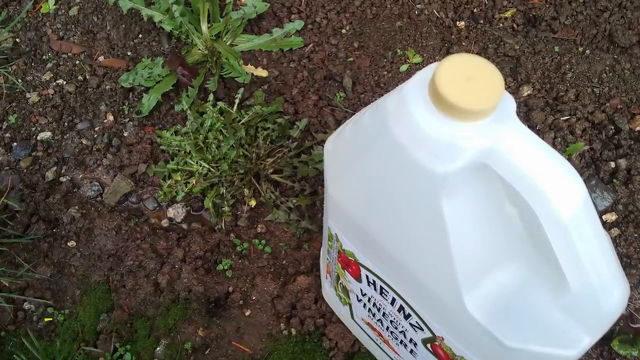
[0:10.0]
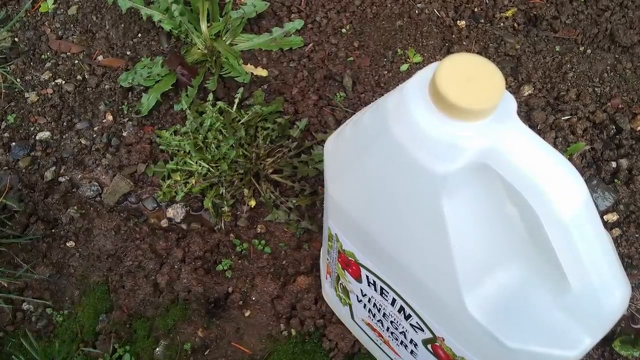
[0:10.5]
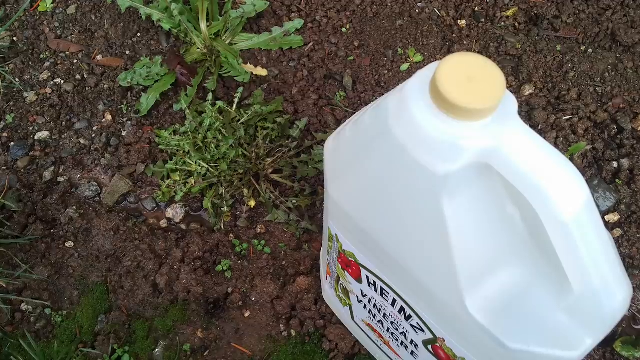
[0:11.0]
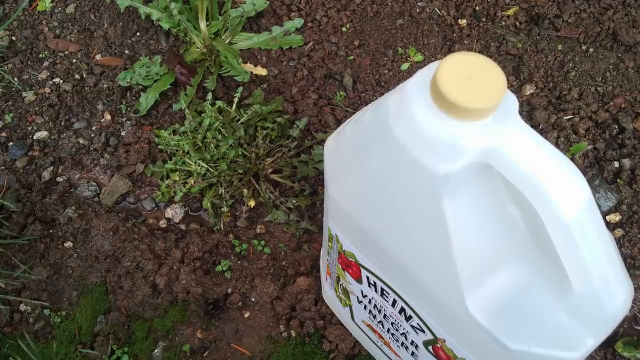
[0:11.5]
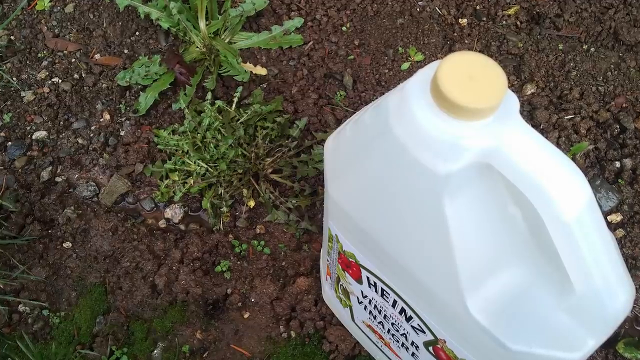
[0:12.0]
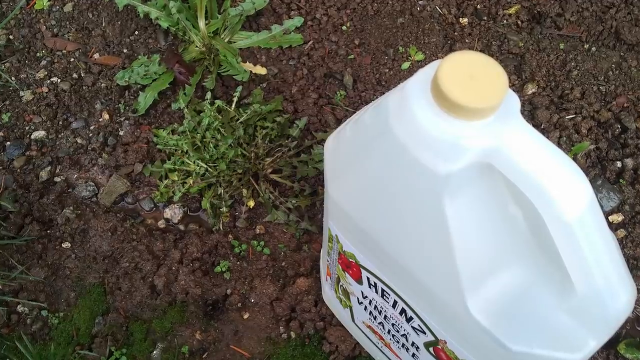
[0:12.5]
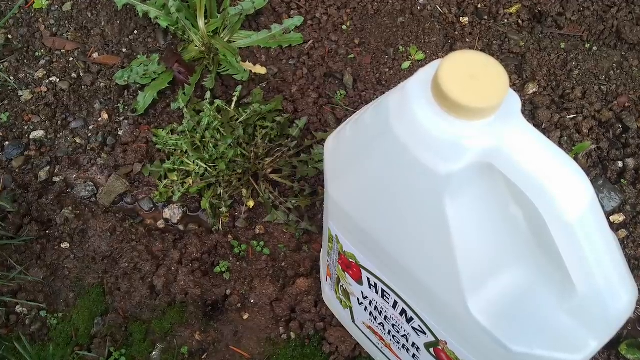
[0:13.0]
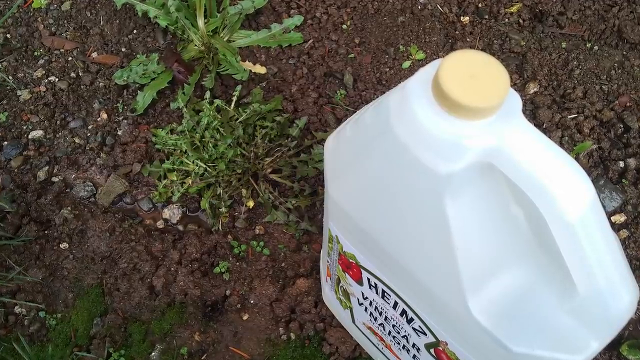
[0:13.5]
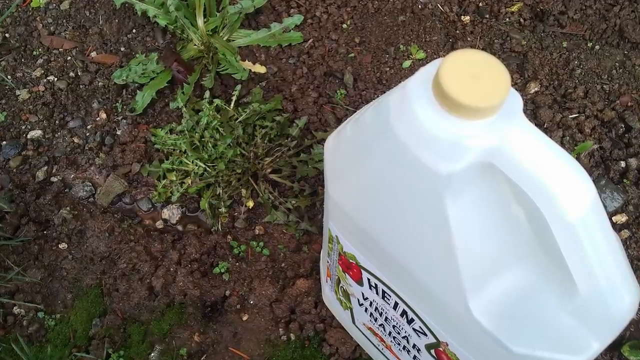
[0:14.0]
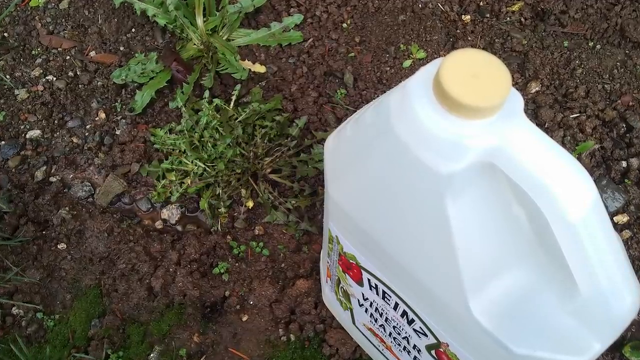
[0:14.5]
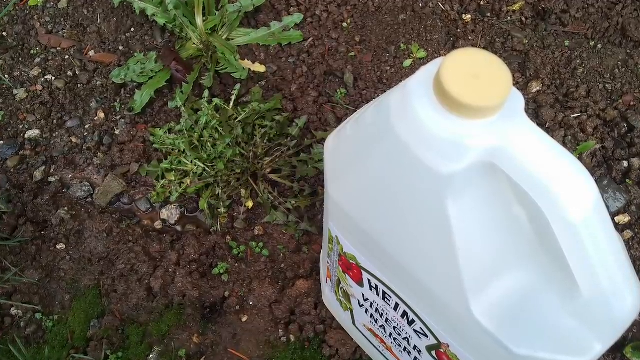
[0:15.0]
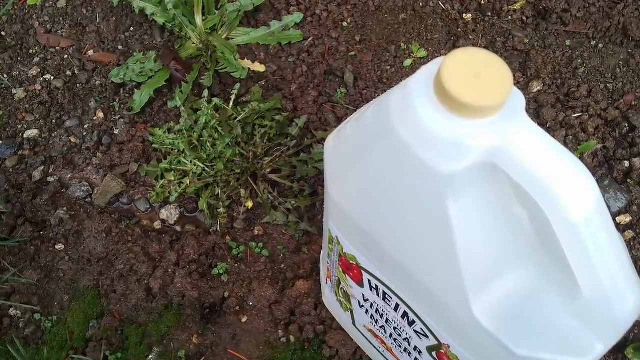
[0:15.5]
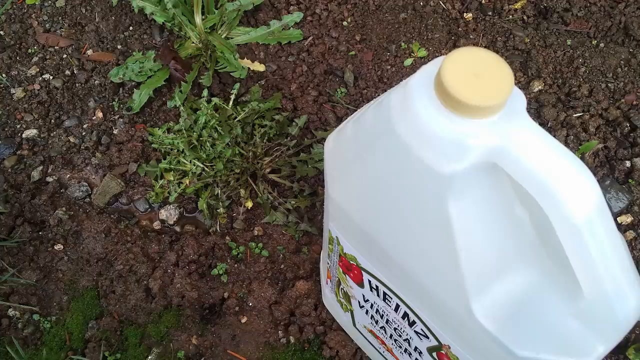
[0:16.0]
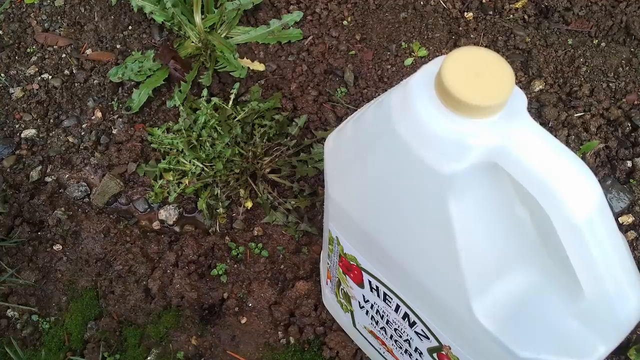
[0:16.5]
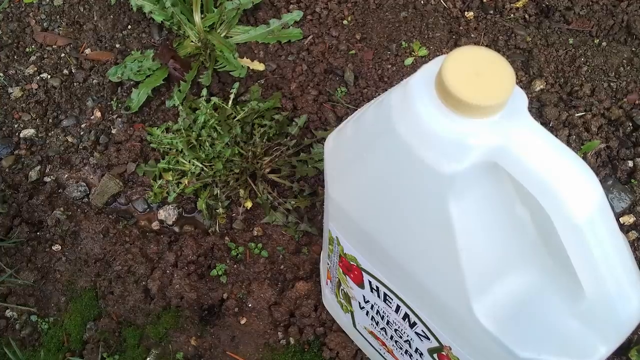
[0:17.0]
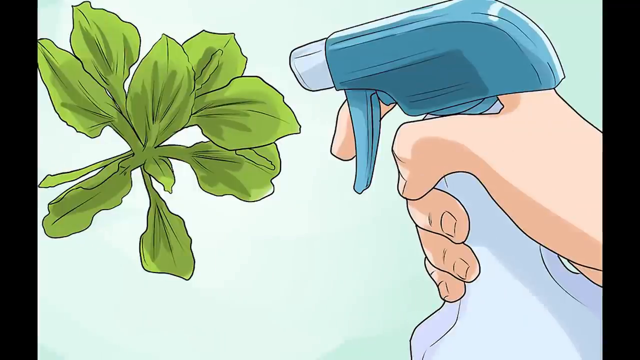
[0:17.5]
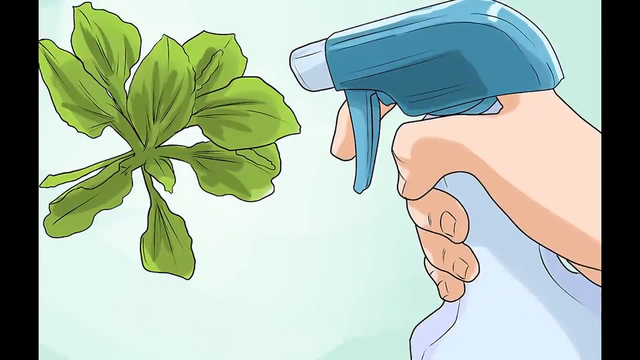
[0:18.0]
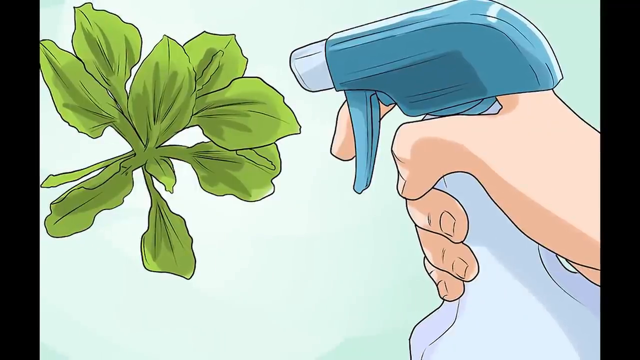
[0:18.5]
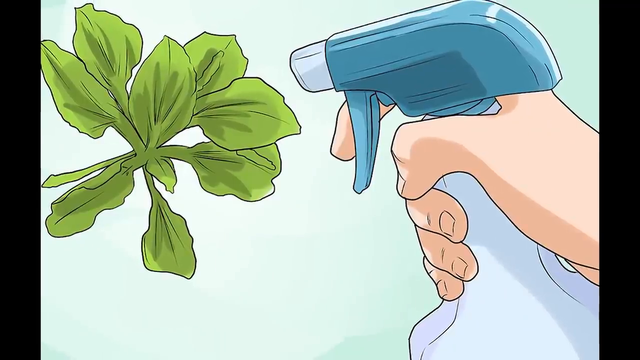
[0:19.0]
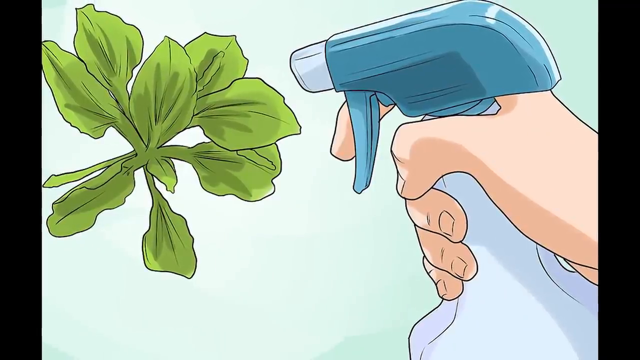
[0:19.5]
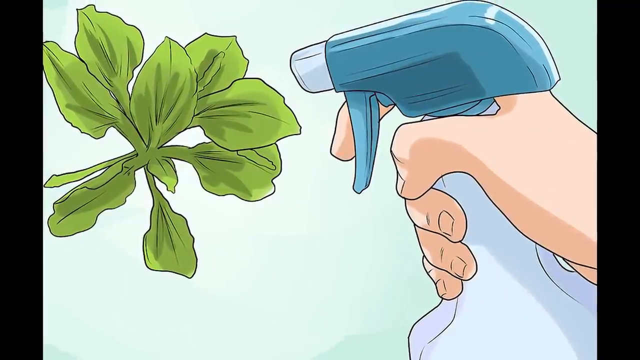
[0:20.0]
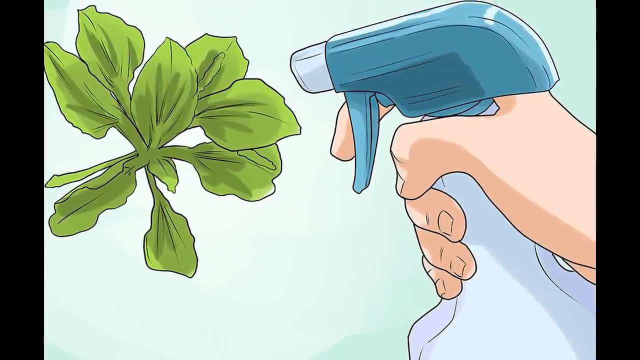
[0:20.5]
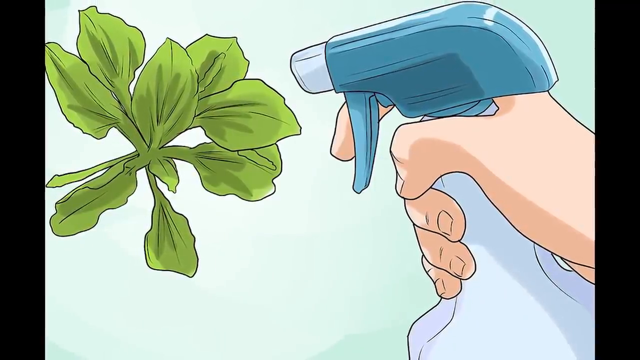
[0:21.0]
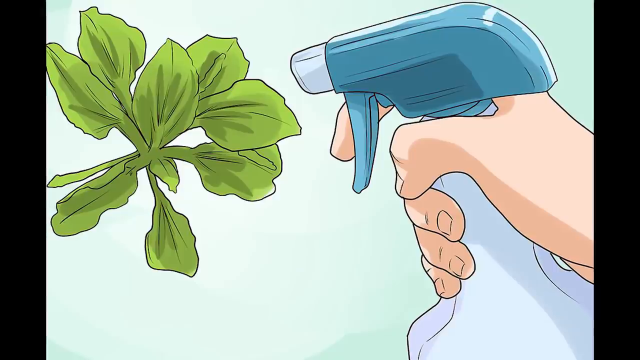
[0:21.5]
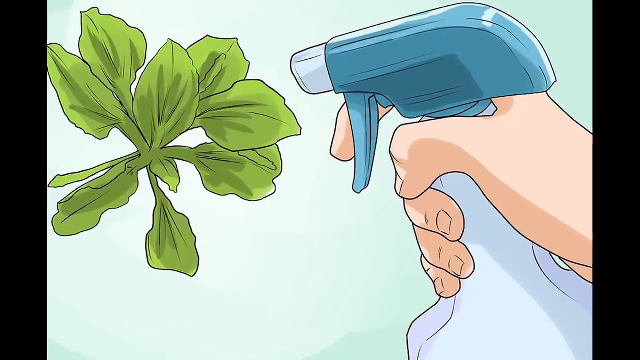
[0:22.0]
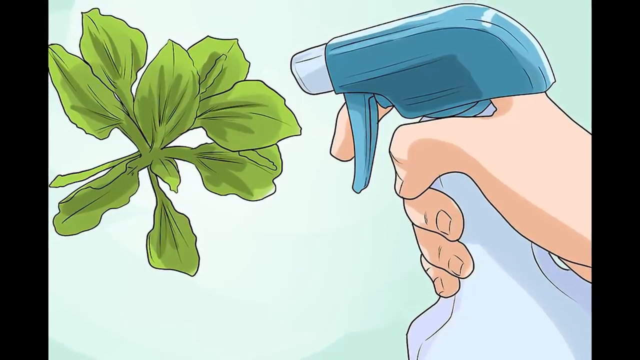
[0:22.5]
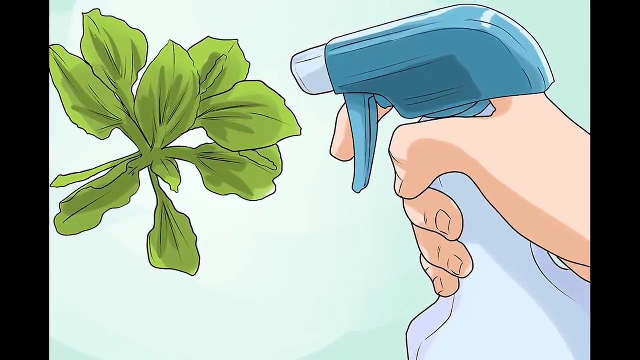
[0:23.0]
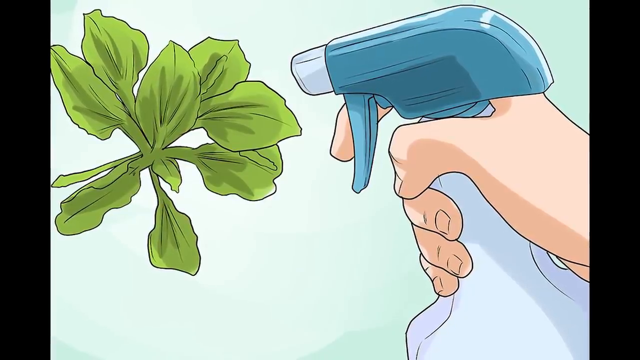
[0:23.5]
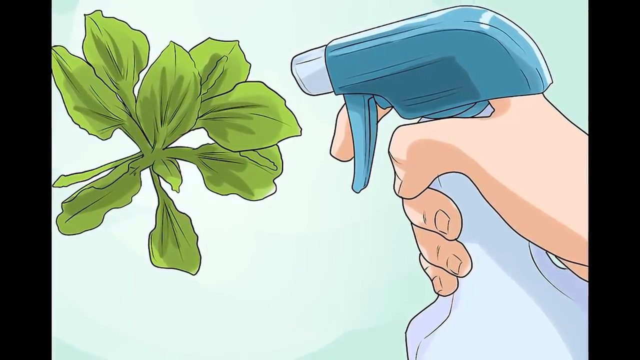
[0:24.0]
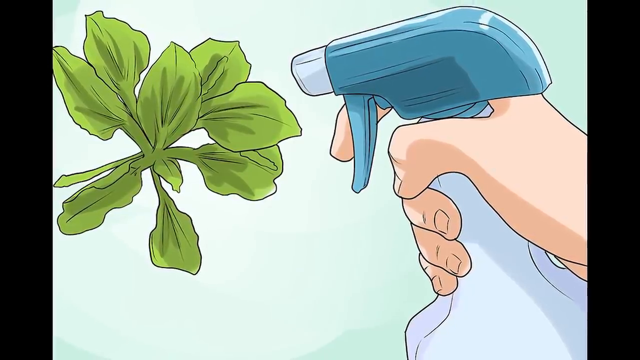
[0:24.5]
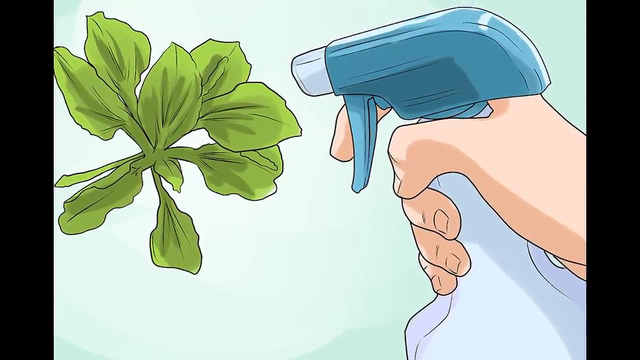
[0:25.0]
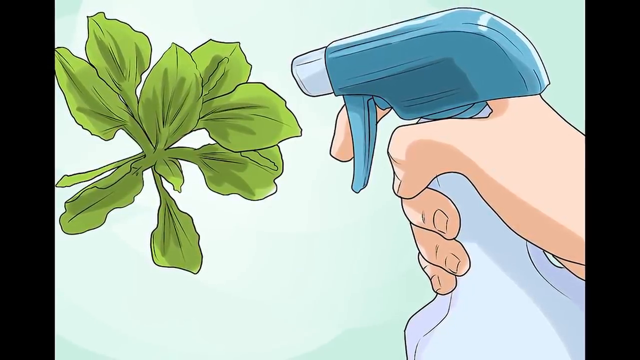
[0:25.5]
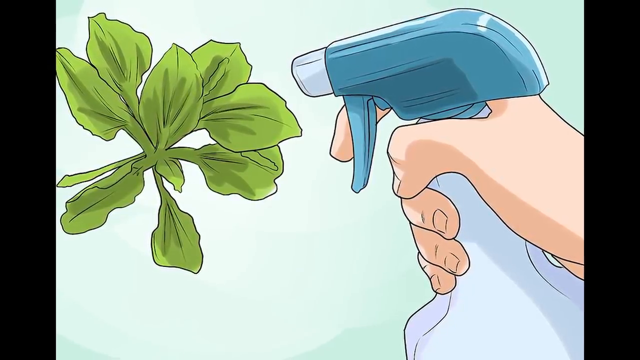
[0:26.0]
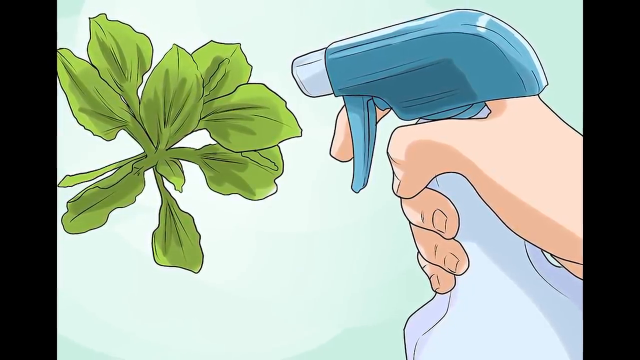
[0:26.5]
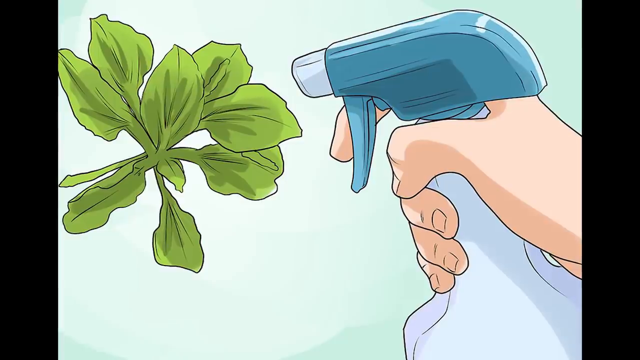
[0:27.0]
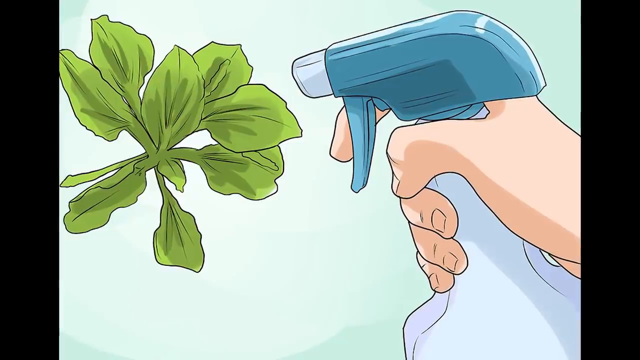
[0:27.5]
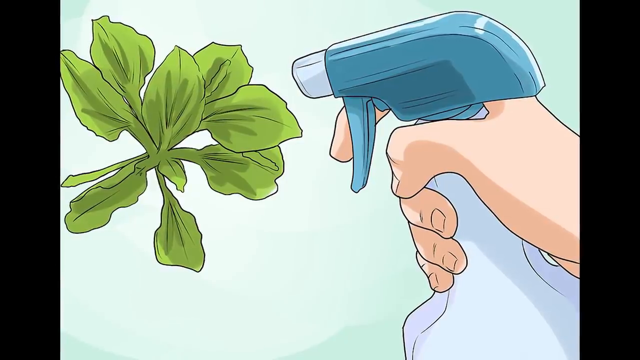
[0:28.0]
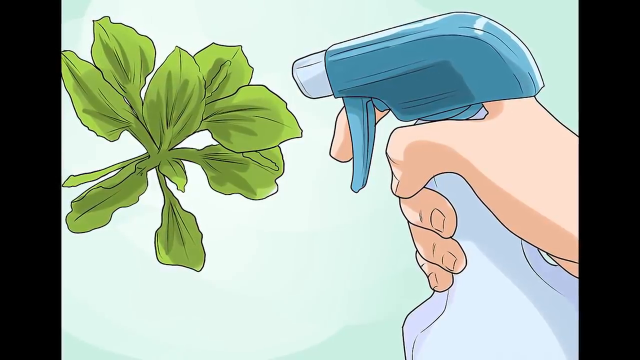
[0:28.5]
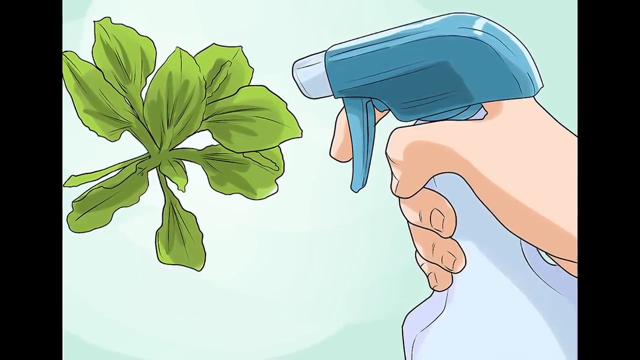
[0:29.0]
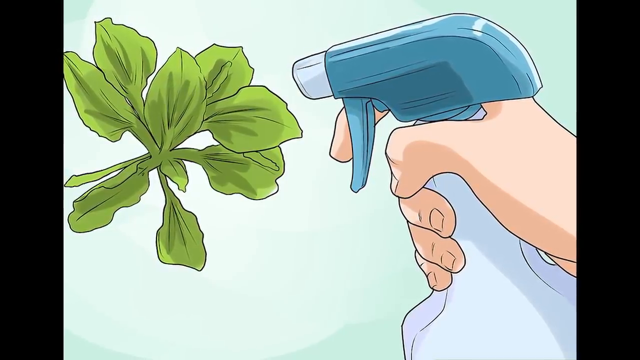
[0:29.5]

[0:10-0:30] The bottle is laying on the ground on brown soil and dirt, with multiple weeds around it. The shot changes to a hyper-realistic, well-drawn cartoon image of a human hand holding a spray bottle with a blue top. The spray bottle is aimed at a green plant on the ground that looks to be a weed, and the ground is white. The image apparently demonstrates spraying the weed. On the Heinz bottle, "pure white vinegar" is written in black text.